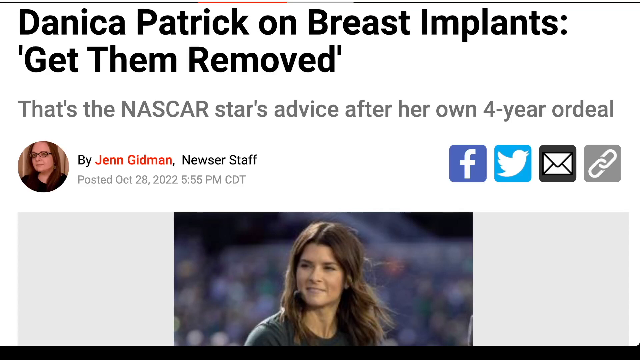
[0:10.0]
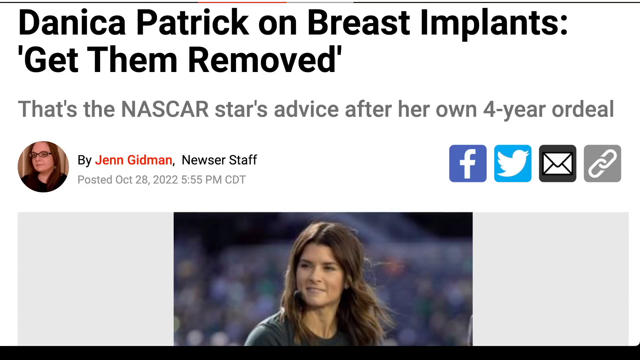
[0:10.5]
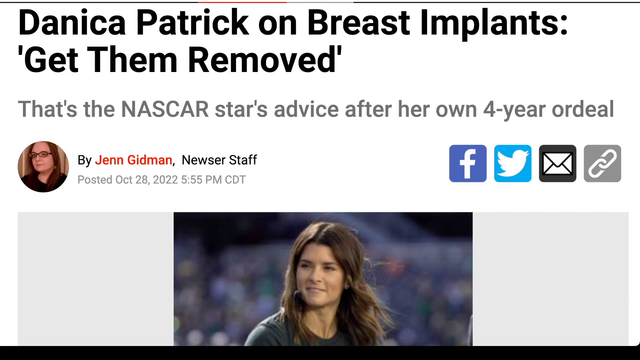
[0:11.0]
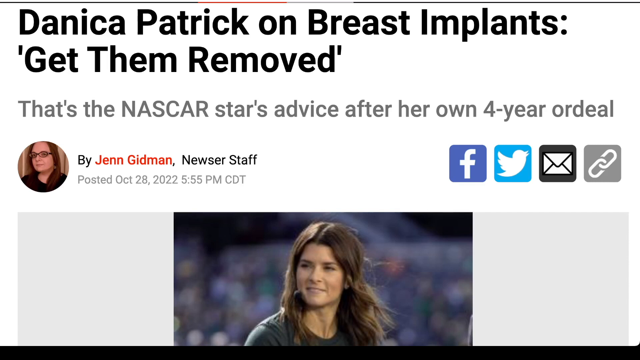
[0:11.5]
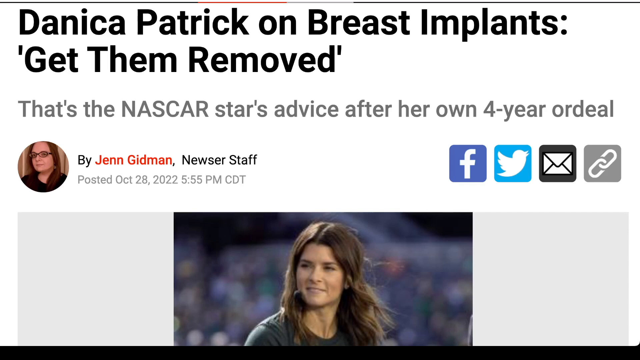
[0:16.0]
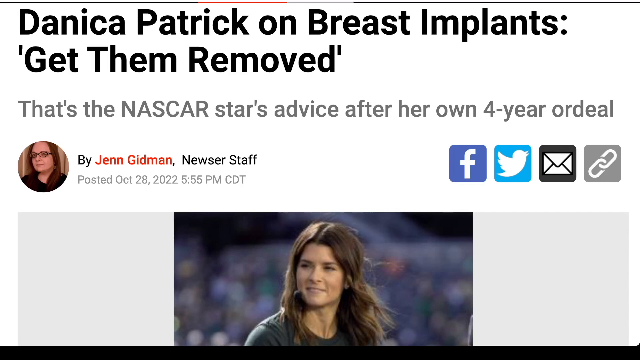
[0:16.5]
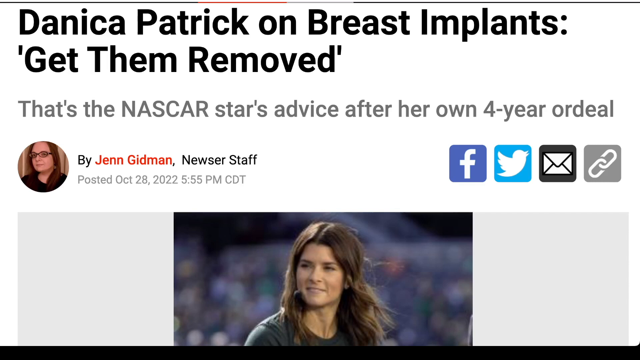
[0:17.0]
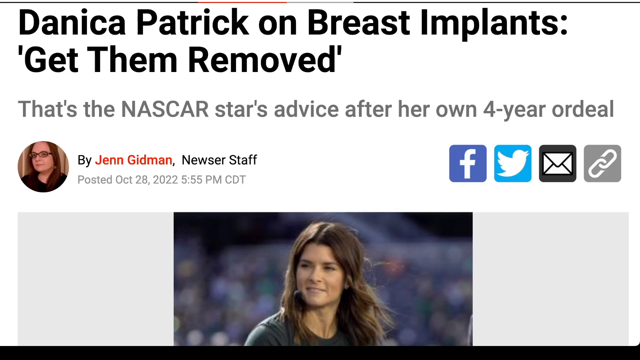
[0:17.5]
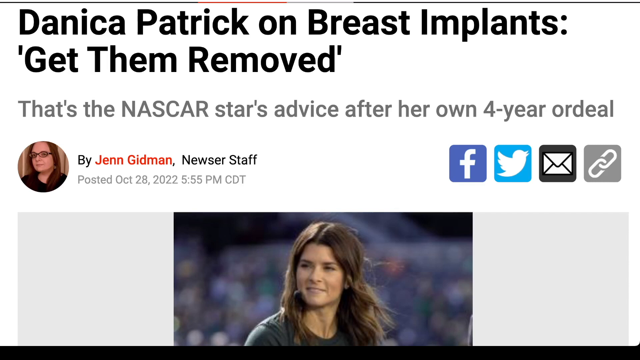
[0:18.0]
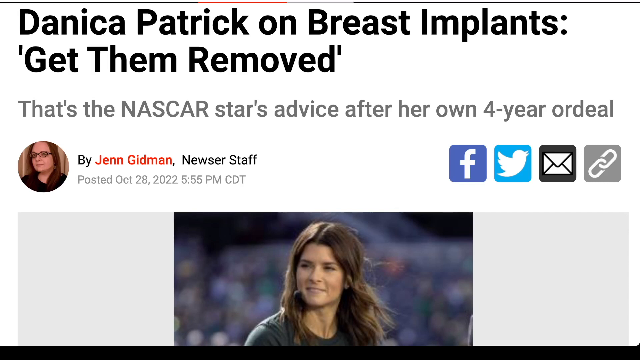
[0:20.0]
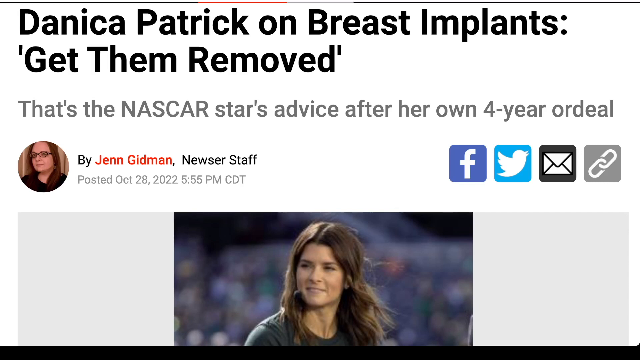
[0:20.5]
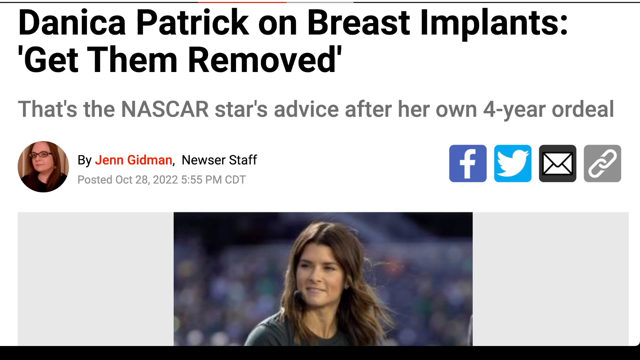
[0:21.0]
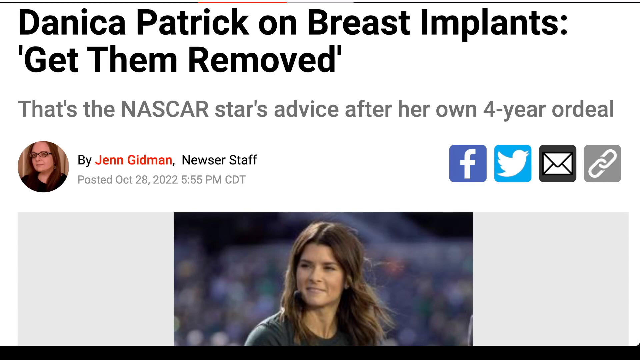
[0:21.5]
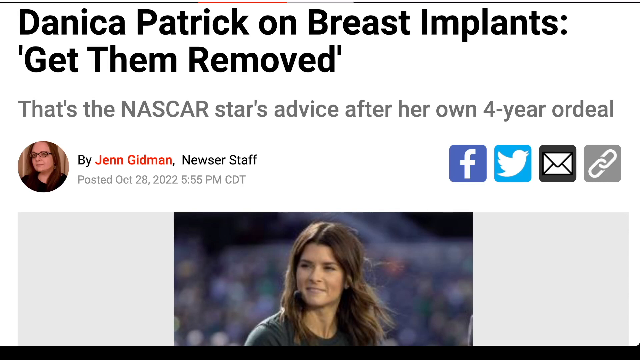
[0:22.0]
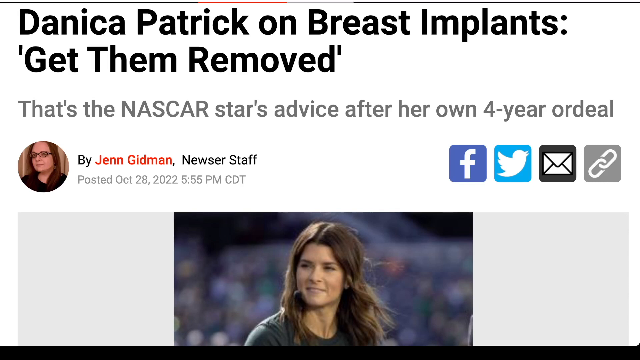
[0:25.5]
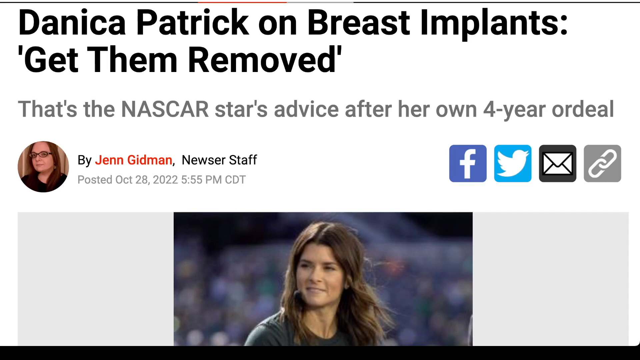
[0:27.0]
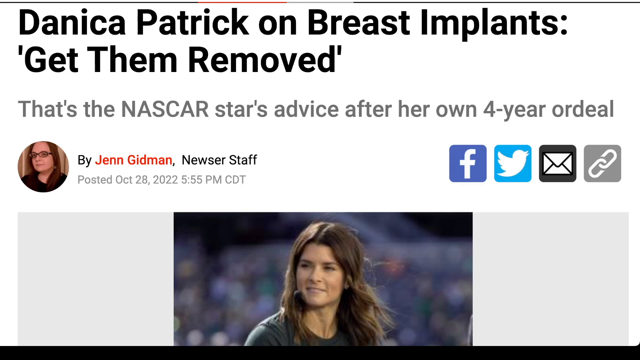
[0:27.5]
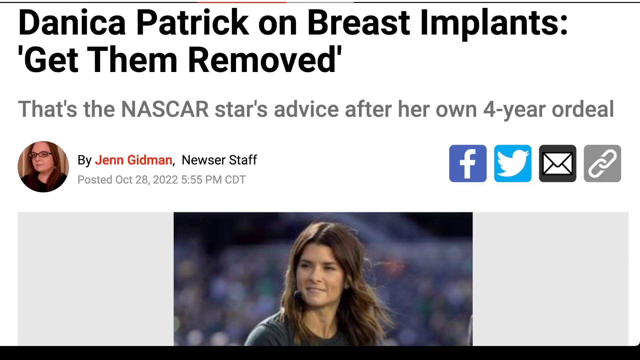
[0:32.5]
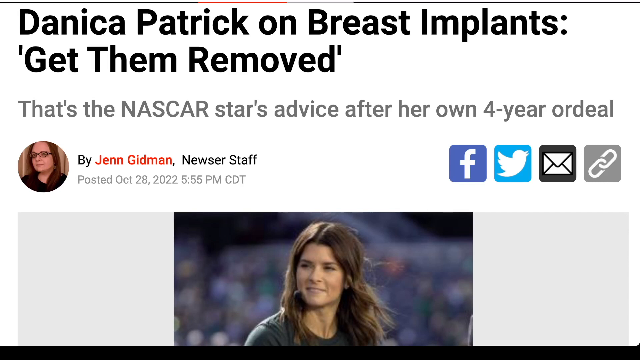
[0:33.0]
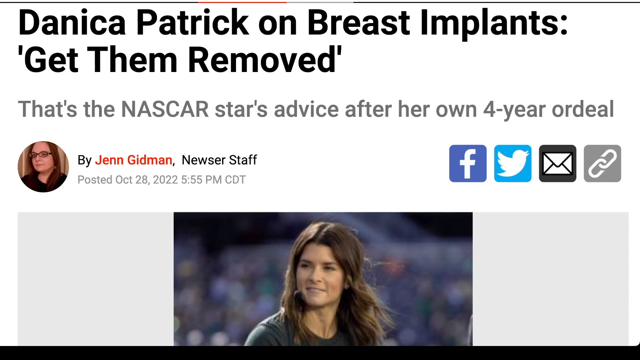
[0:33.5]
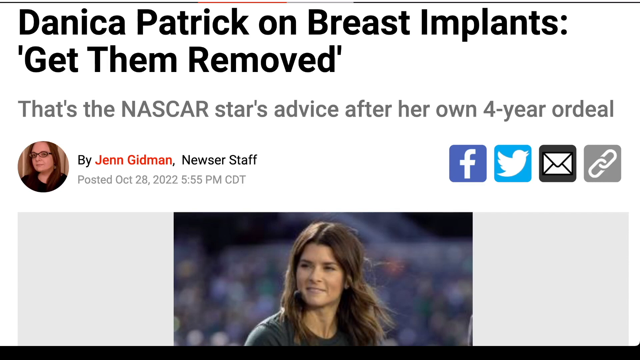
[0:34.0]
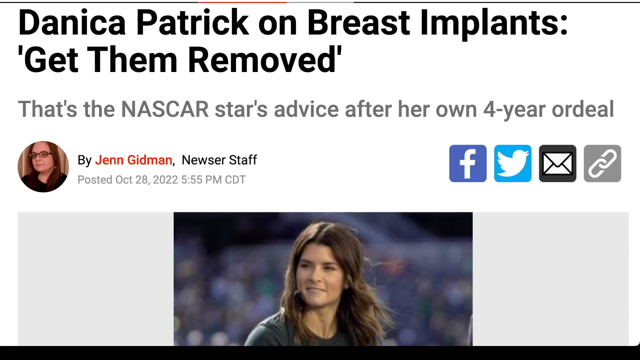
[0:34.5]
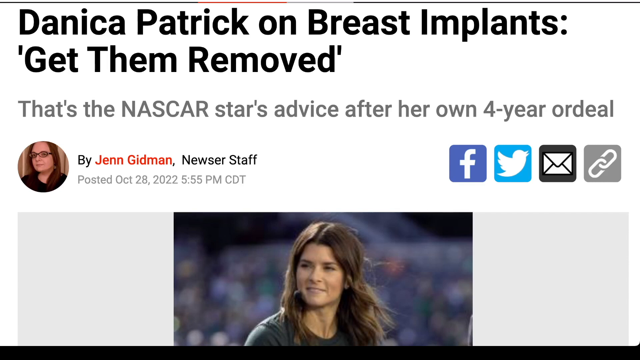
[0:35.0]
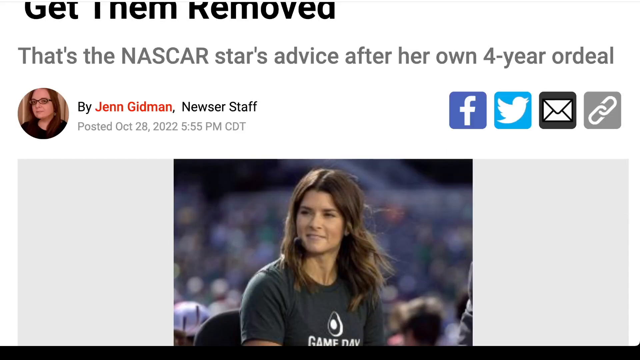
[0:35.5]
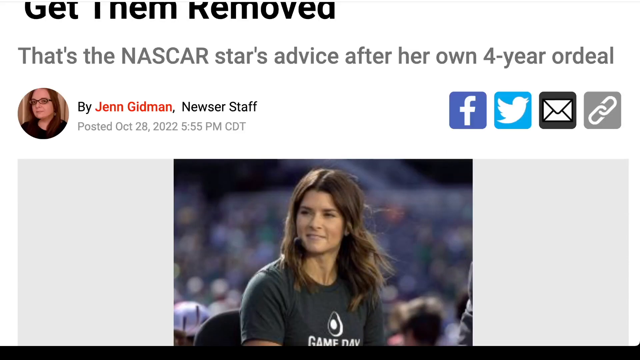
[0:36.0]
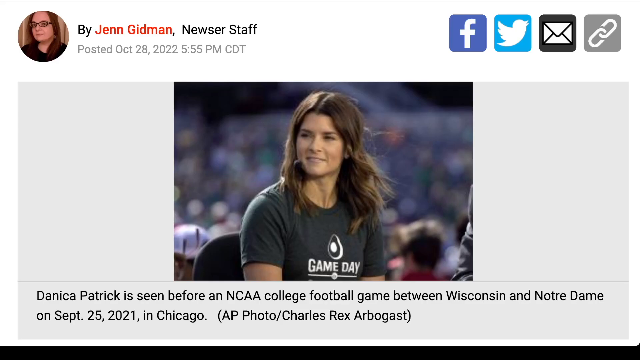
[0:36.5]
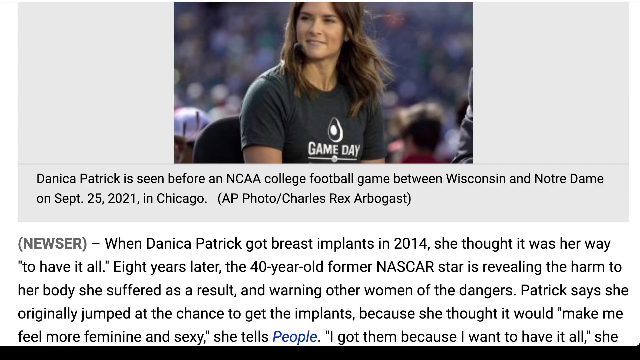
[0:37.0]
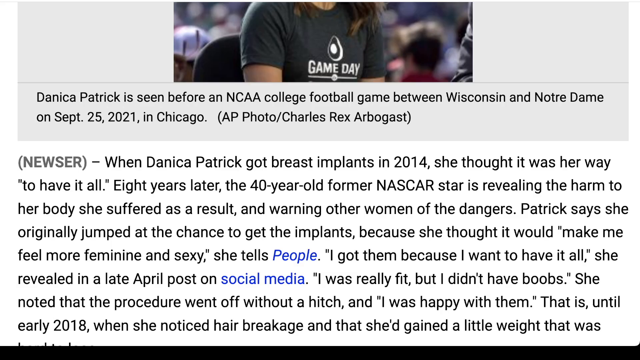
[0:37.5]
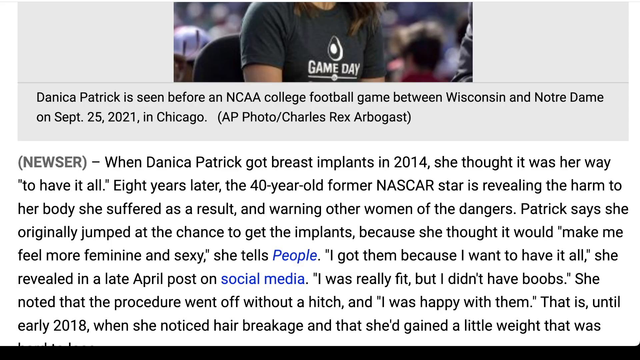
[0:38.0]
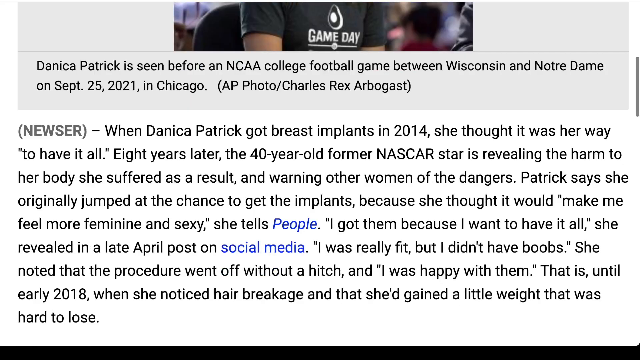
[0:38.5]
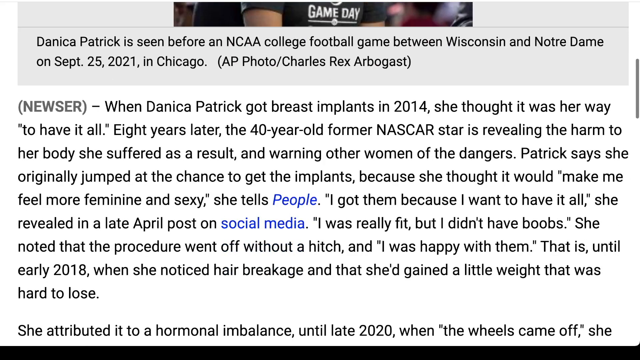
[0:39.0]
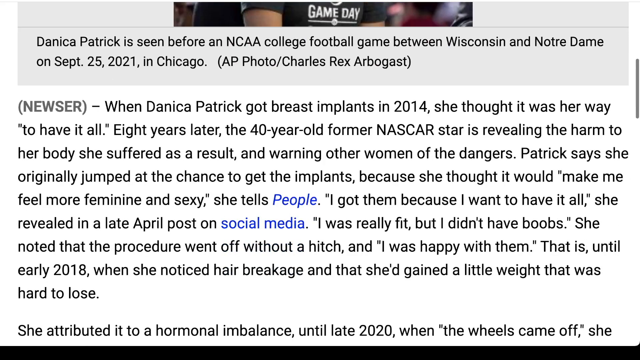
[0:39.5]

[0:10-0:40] The same scene continues with little change. In the middle of the picture is an image of Danica Patrick sitting down, with what appears to be a crowd behind her, probably at some type of studio. Near the very end, someone finally scrolls down and reveals a fuller picture of Danica at the top of the article. She is sitting down, apparently on College Game Day, wearing a gray College Game Day t-shirt; she is a white woman with long dark brown hair. The caption below reads "Danica Patrick is seen before the NCAA College World Game between Wisconsin and Notre Dame on September 25th, 2001 in Chicago. AP Photo, Charles Rex Arbogast." Below the photo caption the actual article begins, covering when Danica Patrick got breast implants.